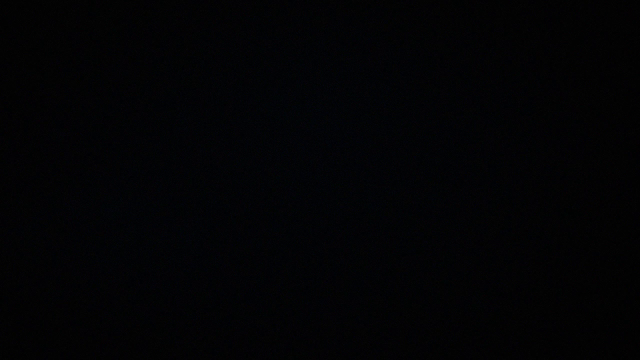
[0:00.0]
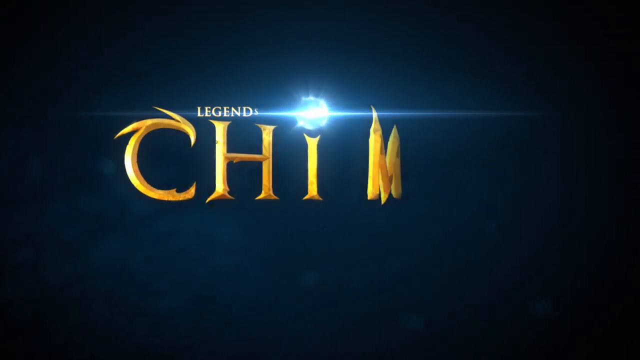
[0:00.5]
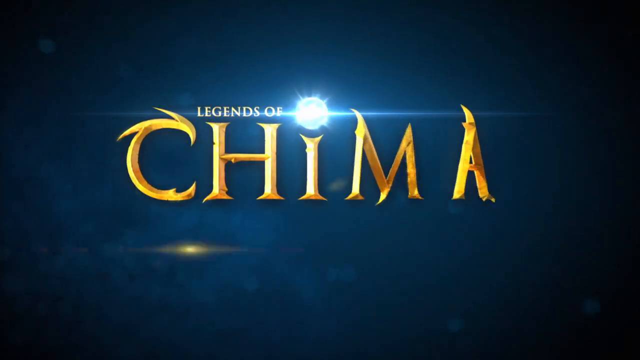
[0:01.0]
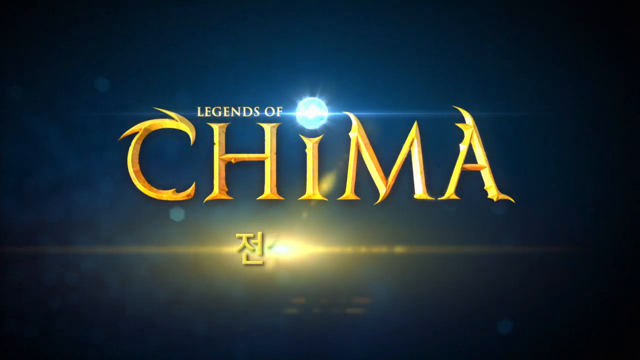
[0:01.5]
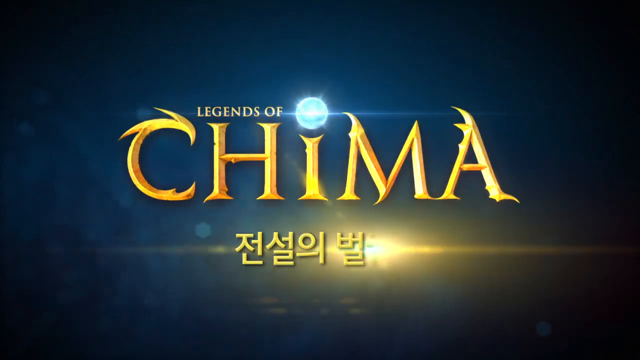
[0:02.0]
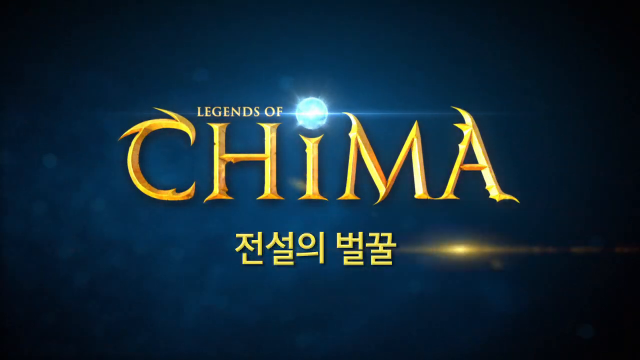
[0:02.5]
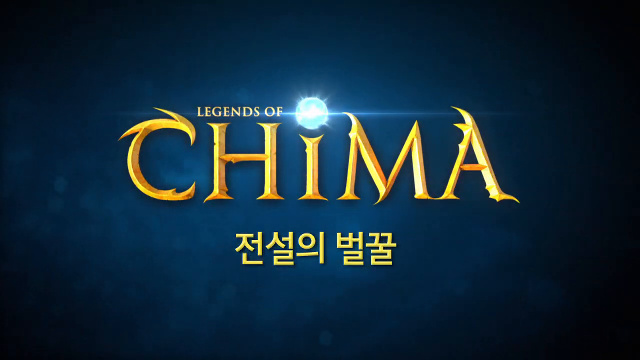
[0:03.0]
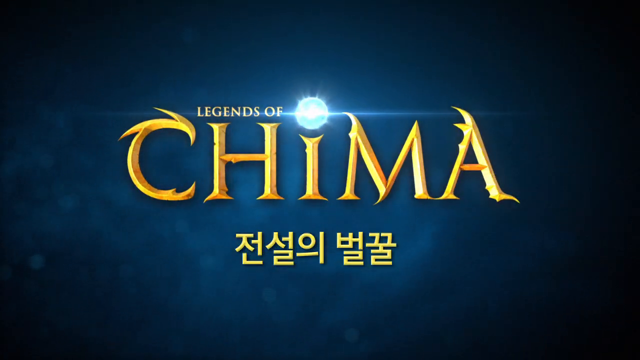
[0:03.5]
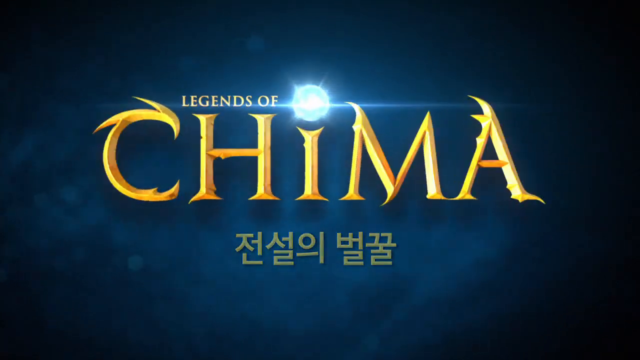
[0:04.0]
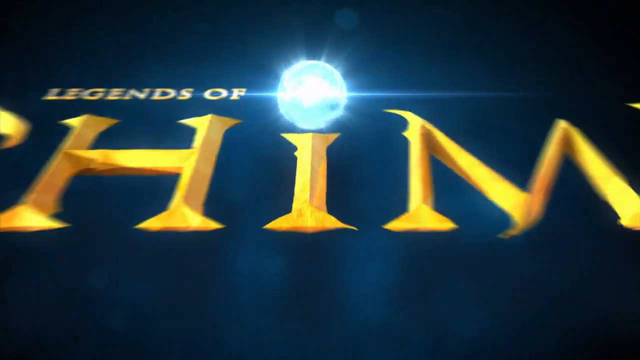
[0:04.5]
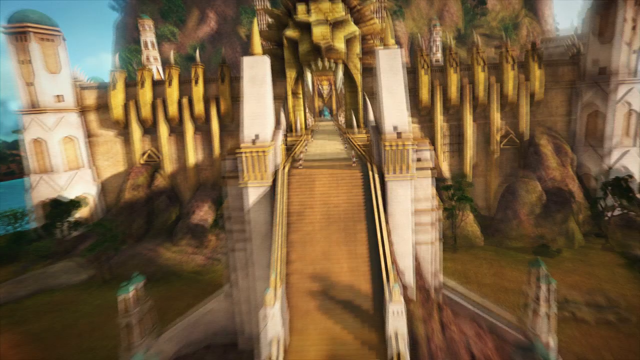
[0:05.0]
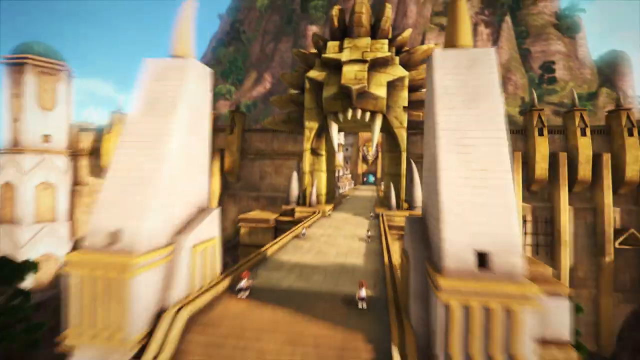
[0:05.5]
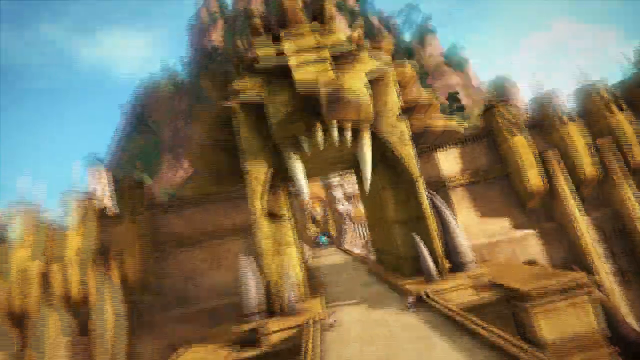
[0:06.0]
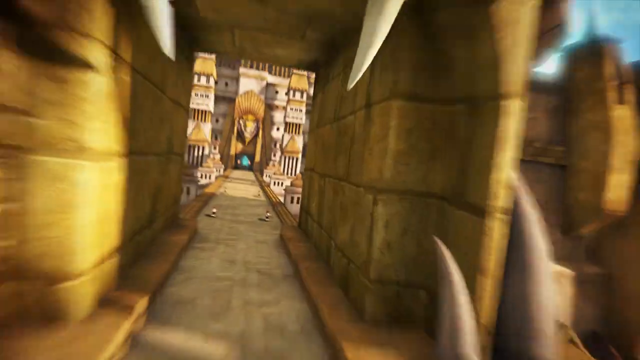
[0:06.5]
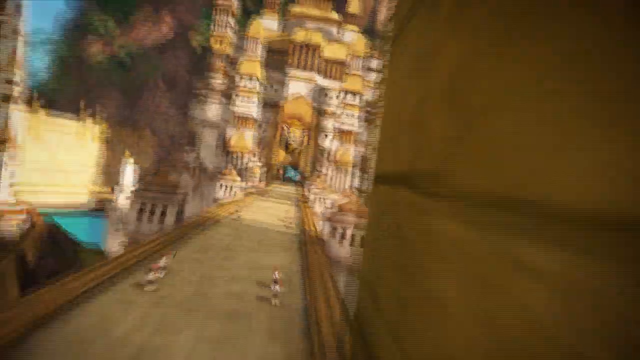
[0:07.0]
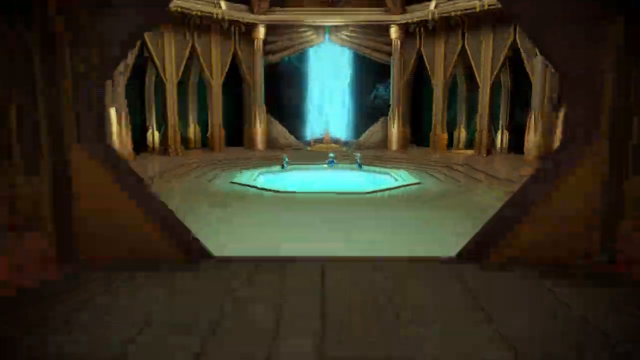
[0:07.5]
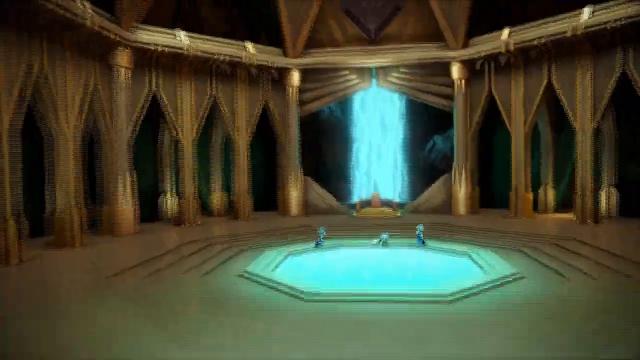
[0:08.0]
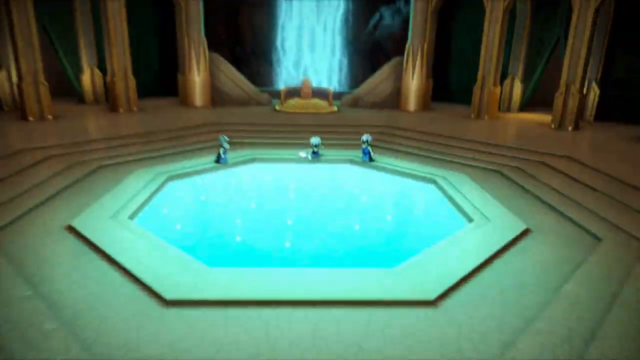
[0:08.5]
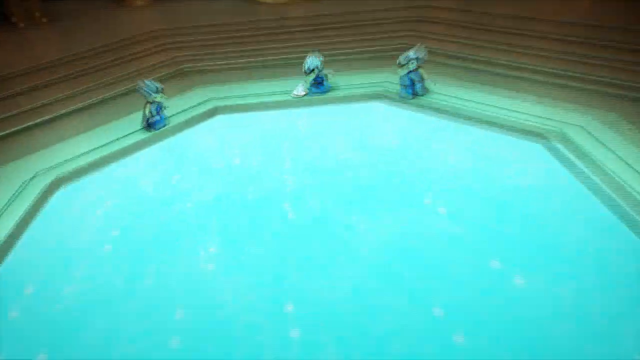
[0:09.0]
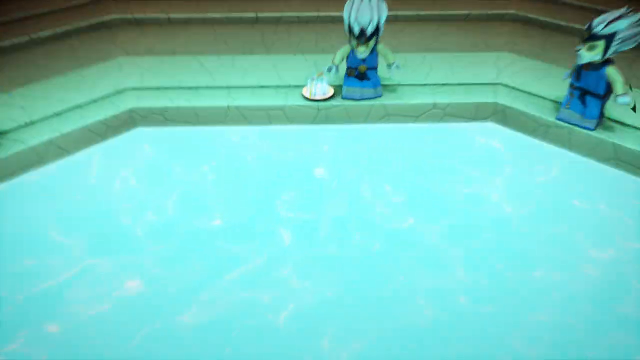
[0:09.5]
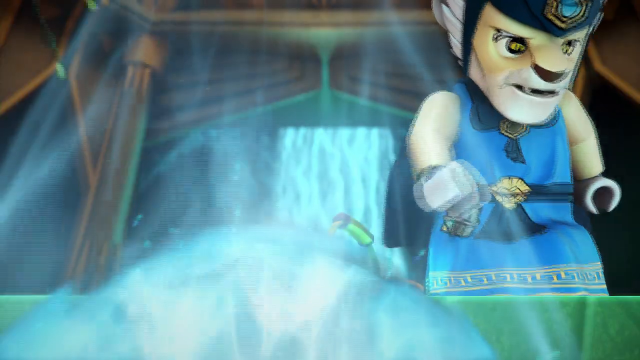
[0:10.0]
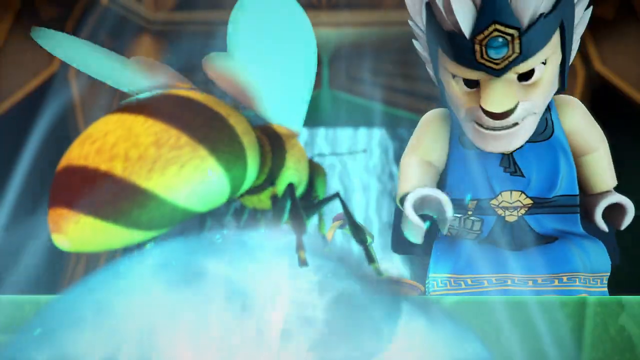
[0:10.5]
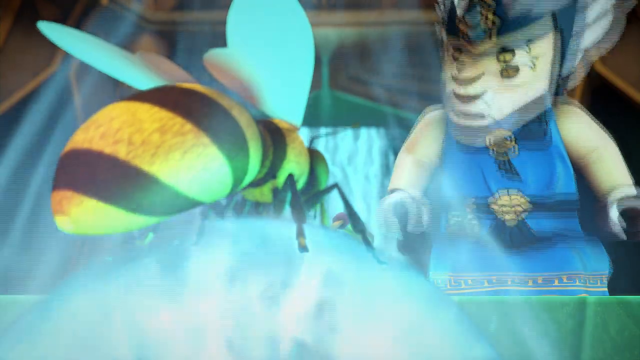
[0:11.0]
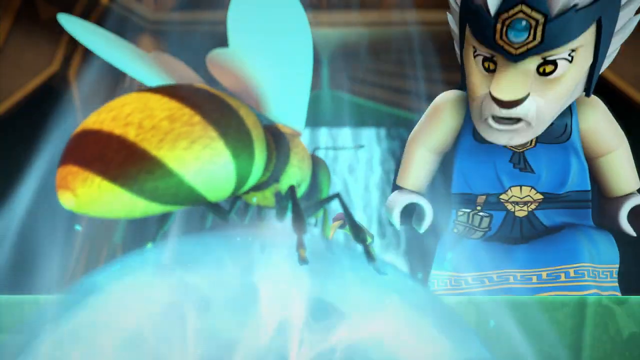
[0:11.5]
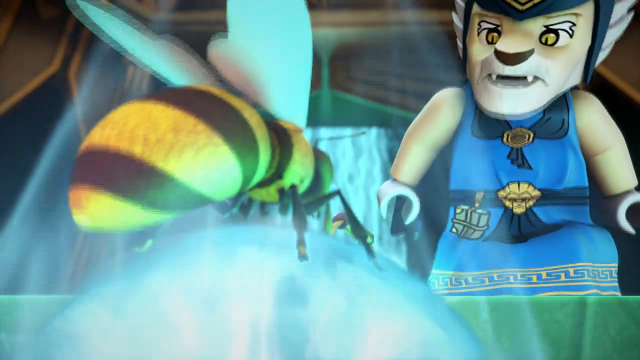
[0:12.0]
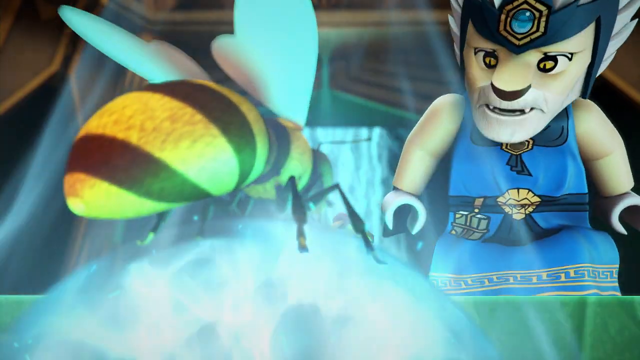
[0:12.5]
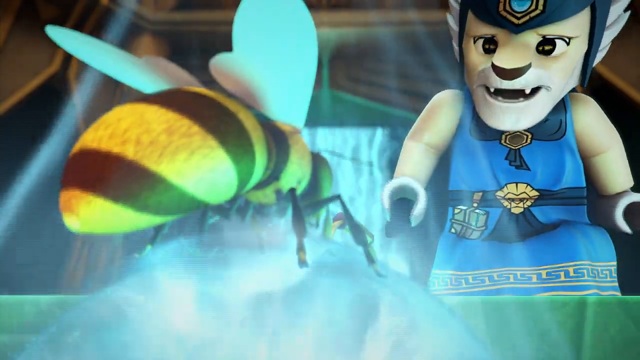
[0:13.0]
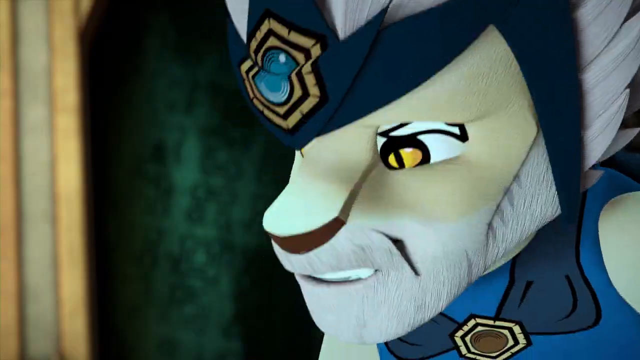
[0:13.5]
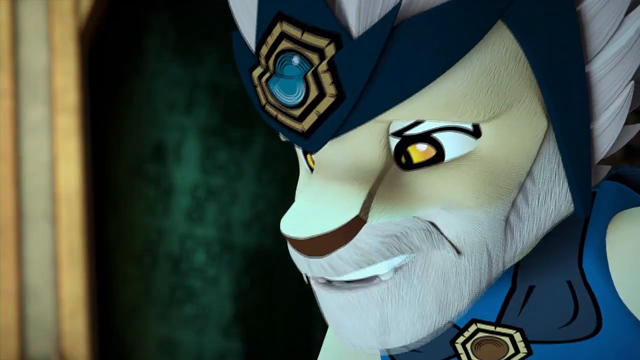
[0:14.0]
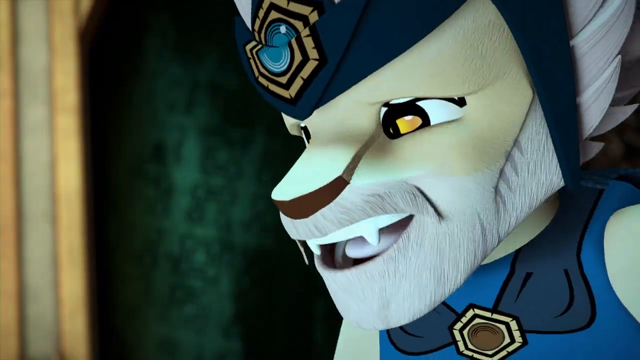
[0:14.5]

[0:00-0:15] The video appears to be an animation of the Legends of Chima, featuring Lego characters. The camera pans through a drawbridge bearing a lion's face, then, in a wobbly motion, speeds through the drawbridge and into a fantasy Lego city with castles. A bee riding on a round crystal ball enters a room inside the castle and takes instructions from one of three rulers, who are standing on the ledge of a twelve-sided reflecting pool with blue water. The ruler who is a lion wears a blue headband with a blue stone in the centre, as well as blue robes.